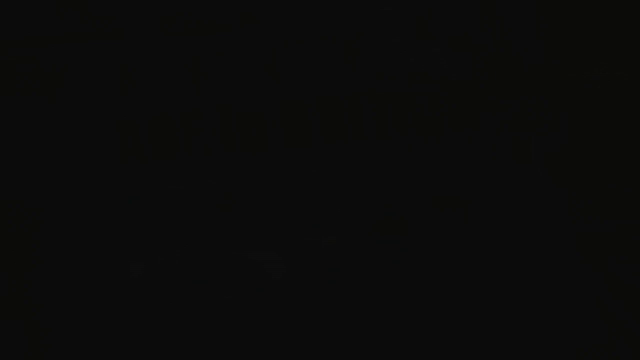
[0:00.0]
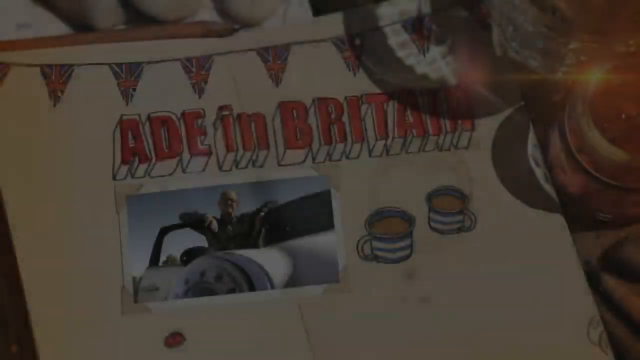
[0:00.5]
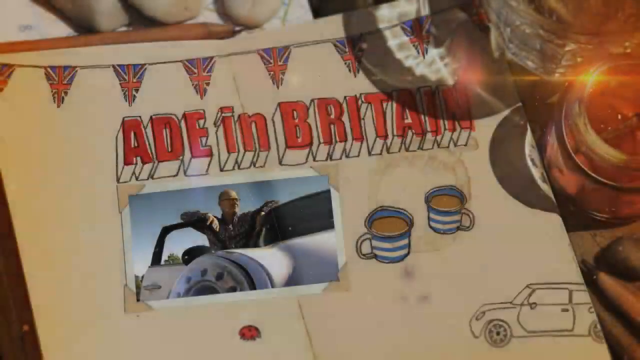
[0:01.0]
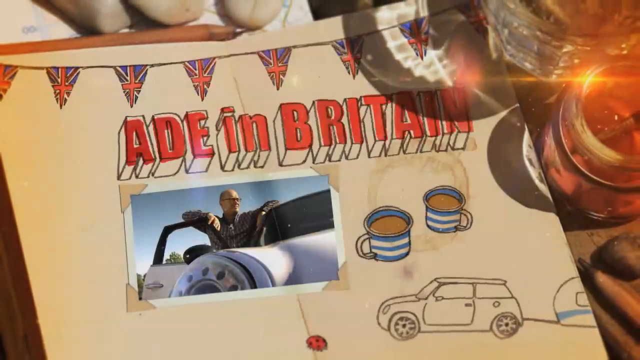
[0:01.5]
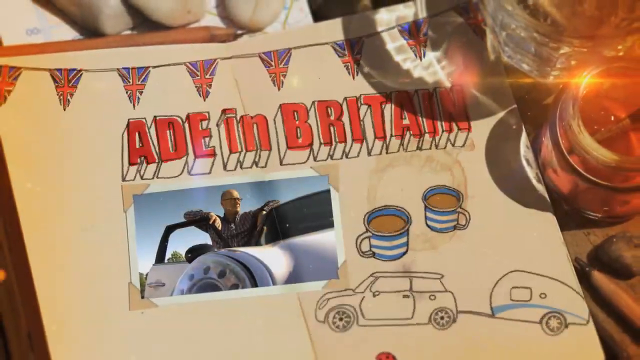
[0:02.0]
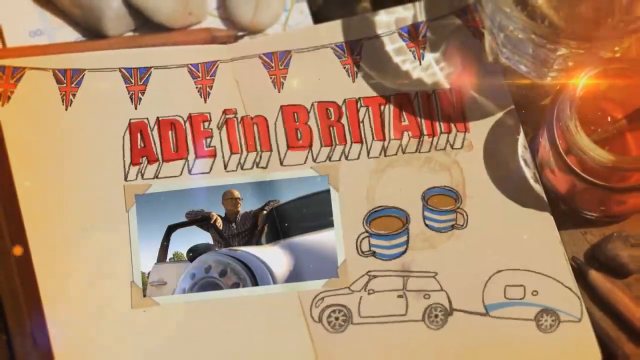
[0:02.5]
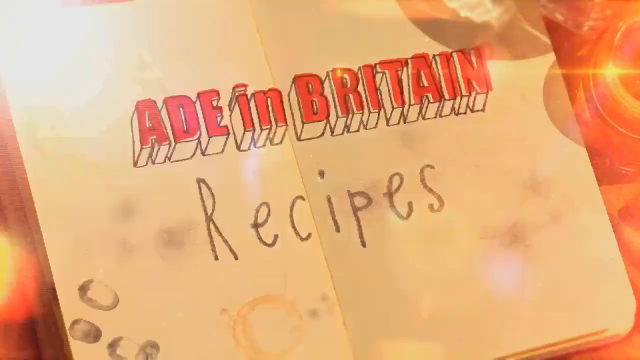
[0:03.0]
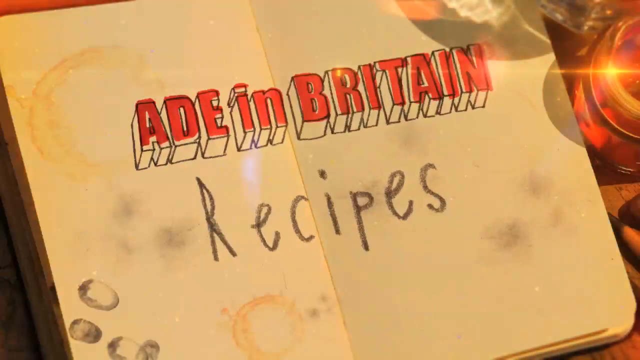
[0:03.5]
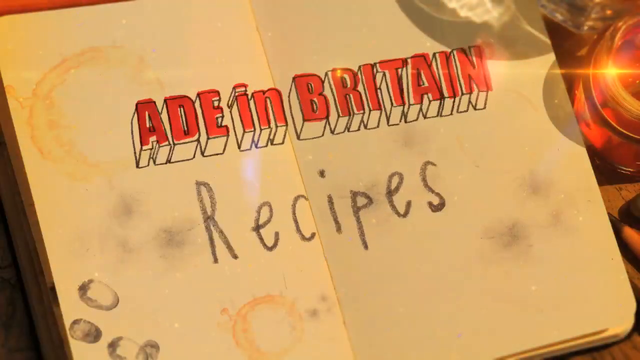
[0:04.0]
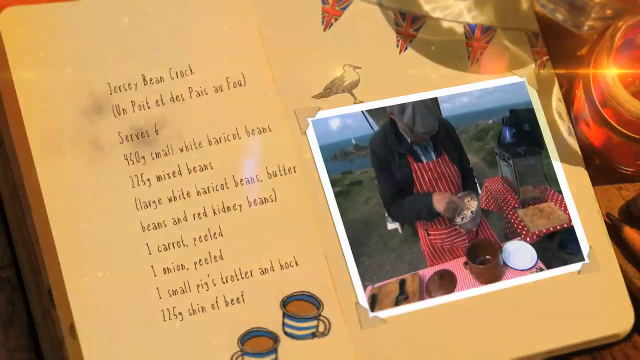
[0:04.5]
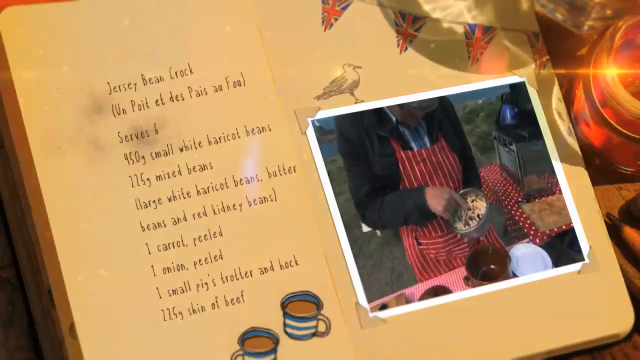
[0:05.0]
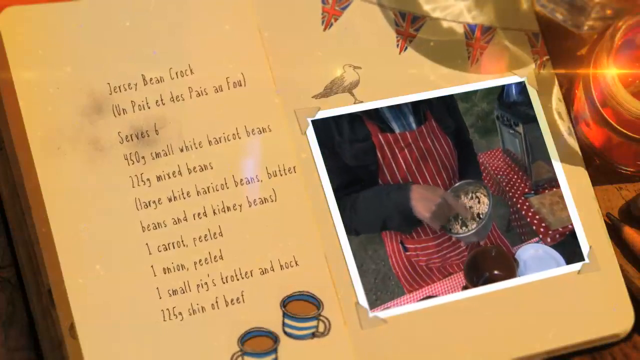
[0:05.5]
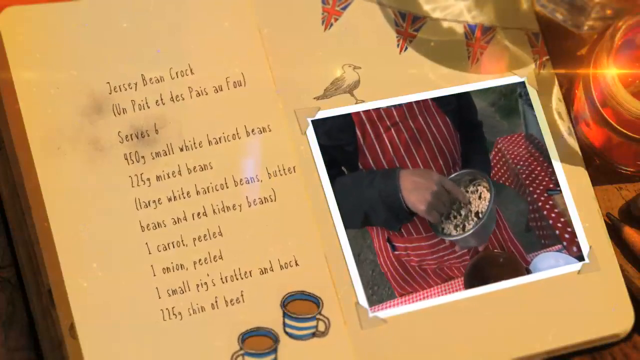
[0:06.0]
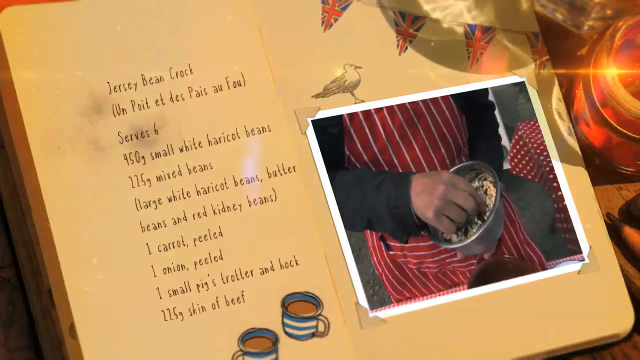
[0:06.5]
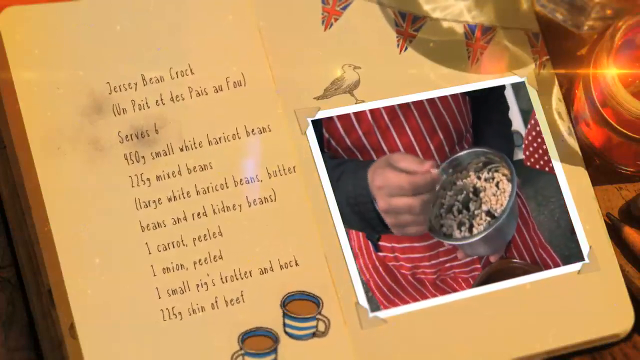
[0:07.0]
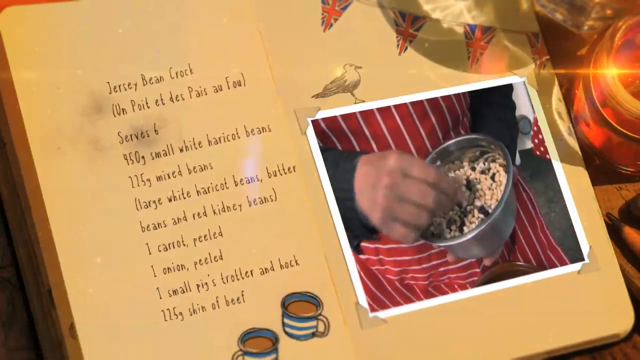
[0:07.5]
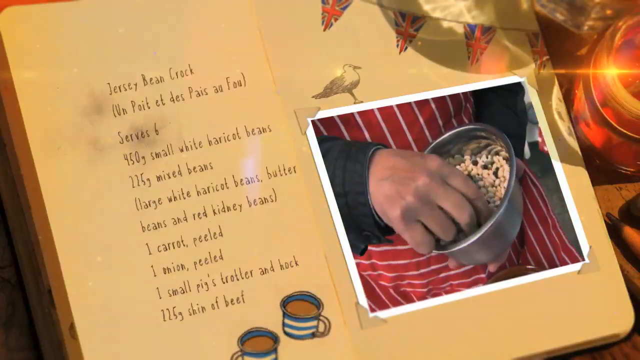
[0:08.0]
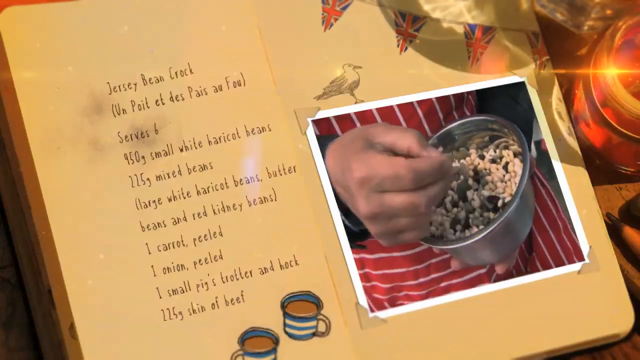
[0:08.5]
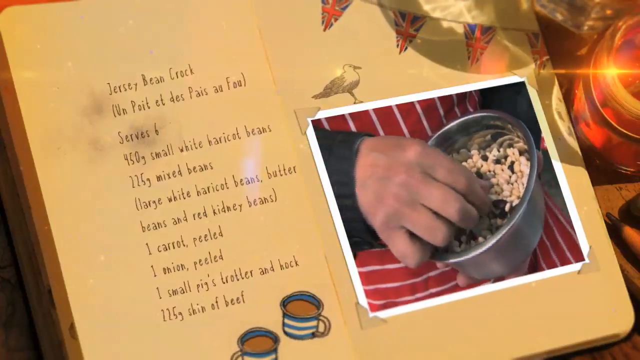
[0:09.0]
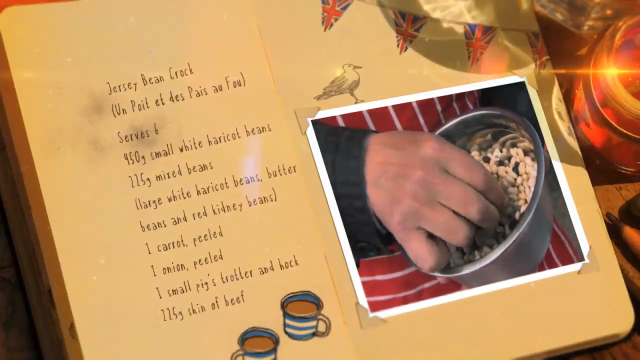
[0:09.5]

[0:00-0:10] An animation plays on a sketch paper reading "A.D.E. in Britain," with a photo insert of a man stepping out of his vehicle, two mugs with blue and white stripes, and the British flag as tiny triangular banners at the top of the sketch. Next, an open book reads "A.D.E. in Britain Recipes." A photo that also serves as a video appears, and on the left side are the ingredients for a Jersey bean crock that serves six: 490 grams of small white haricot beans; 225 grams of mixed beans (large white haricot beans, butter beans and red kidney beans); one carrot, peeled; one onion, peeled; one small pig's trotter and hock; and 225 grams of a shin of beef. In the moving picture, the chef mixes everything in a steel bowl with their hands.